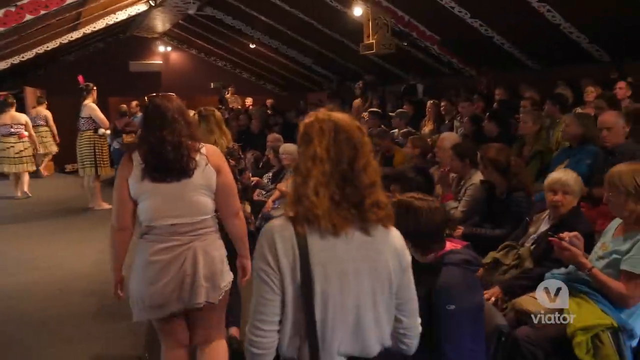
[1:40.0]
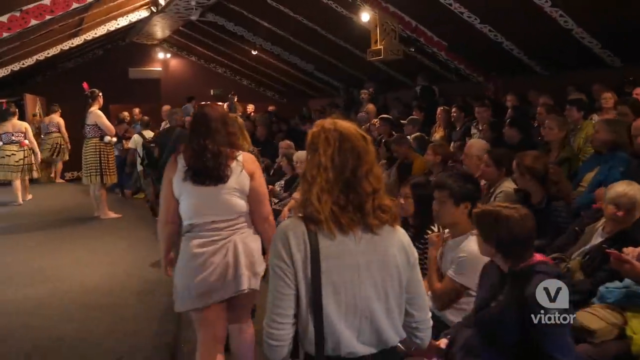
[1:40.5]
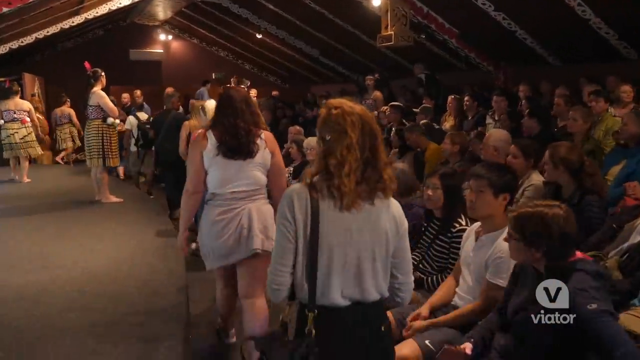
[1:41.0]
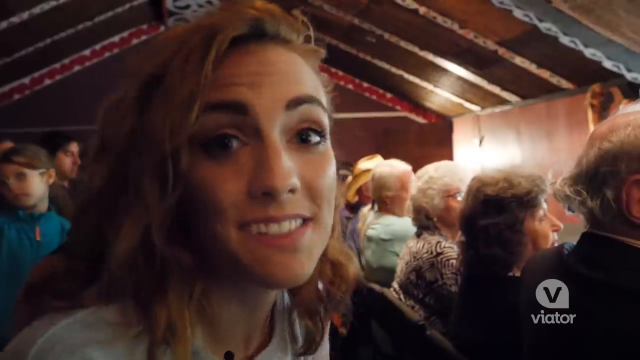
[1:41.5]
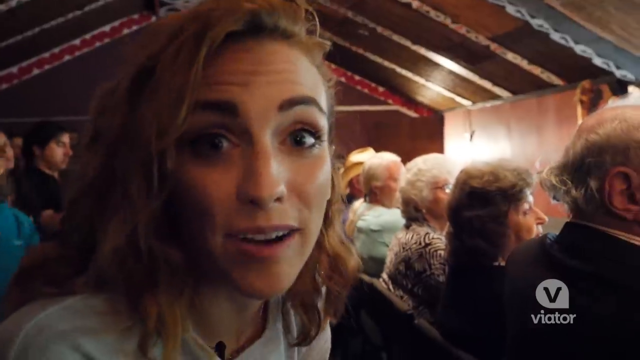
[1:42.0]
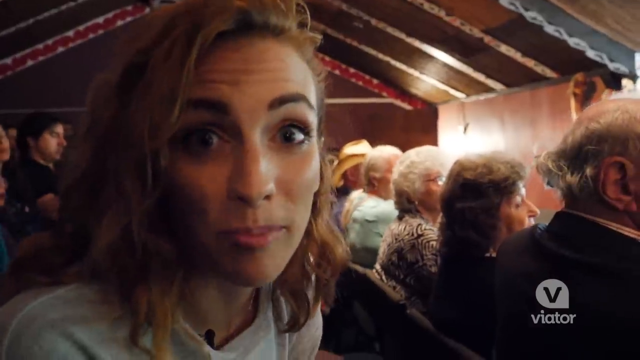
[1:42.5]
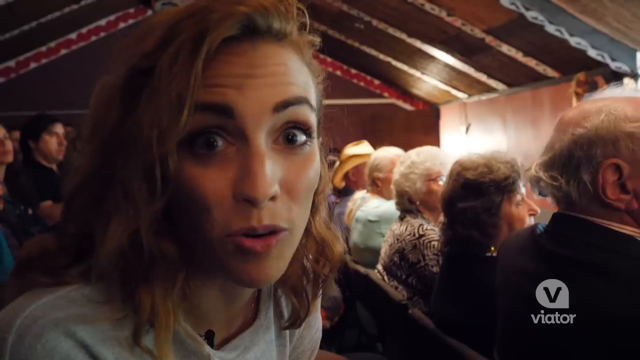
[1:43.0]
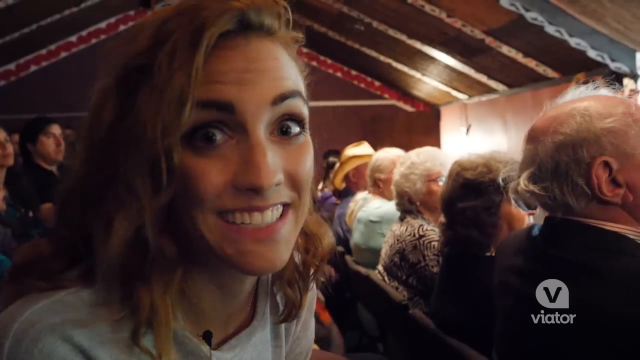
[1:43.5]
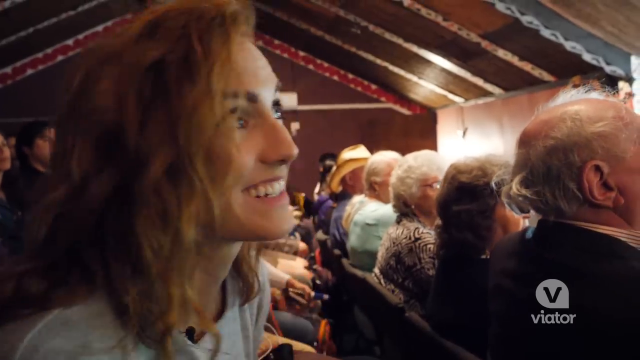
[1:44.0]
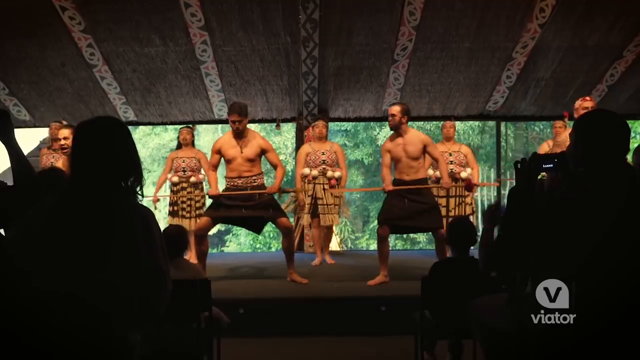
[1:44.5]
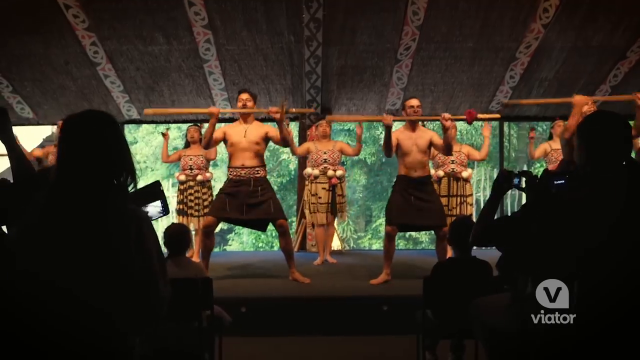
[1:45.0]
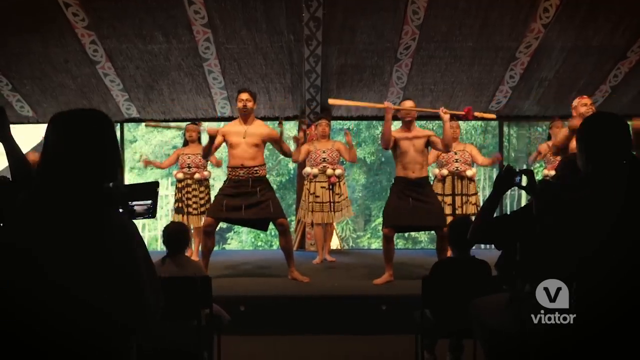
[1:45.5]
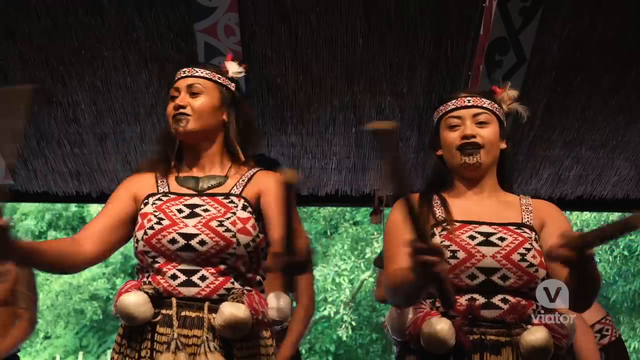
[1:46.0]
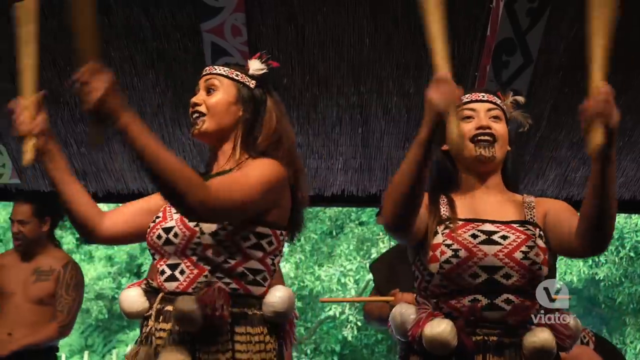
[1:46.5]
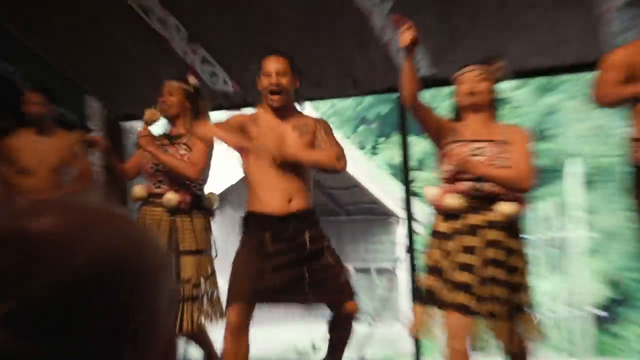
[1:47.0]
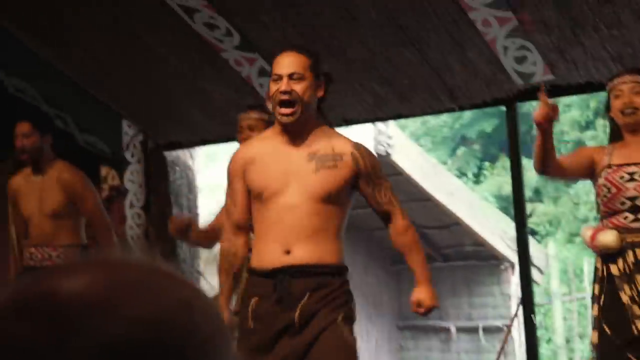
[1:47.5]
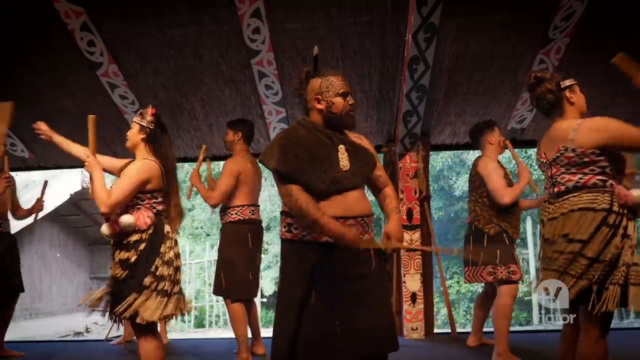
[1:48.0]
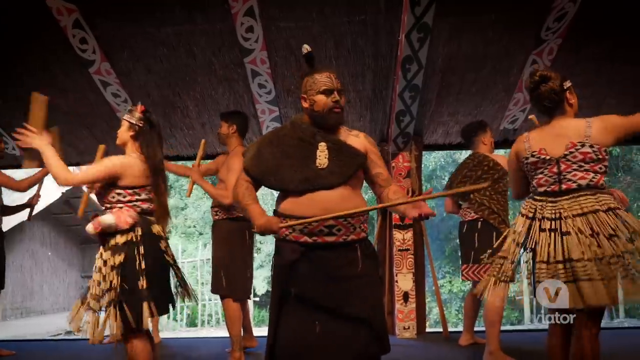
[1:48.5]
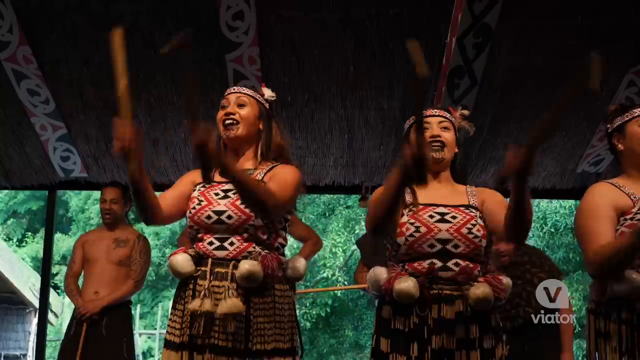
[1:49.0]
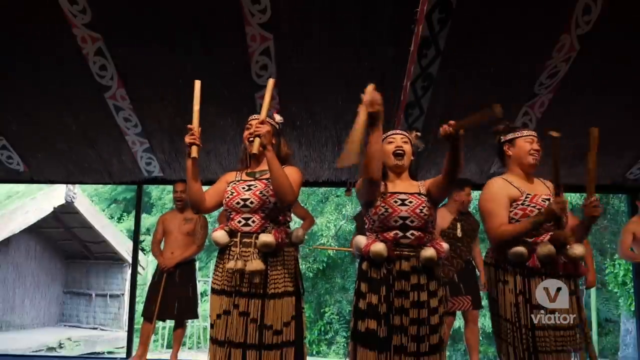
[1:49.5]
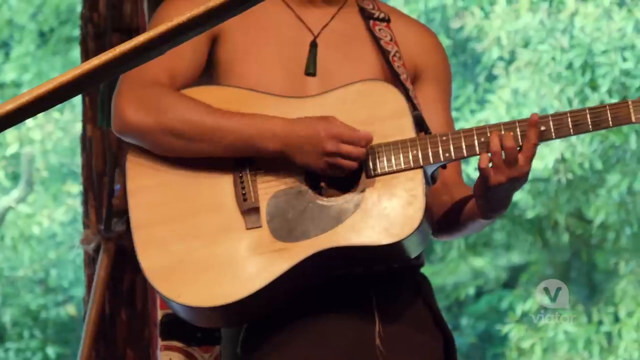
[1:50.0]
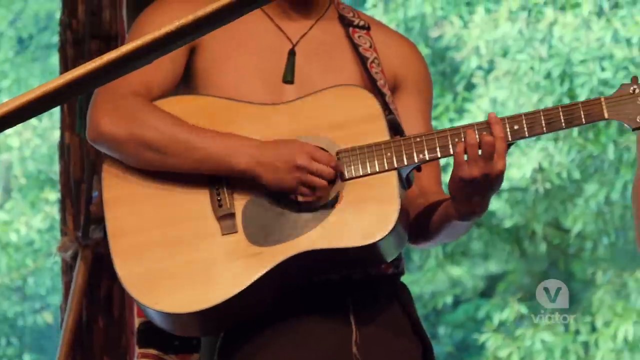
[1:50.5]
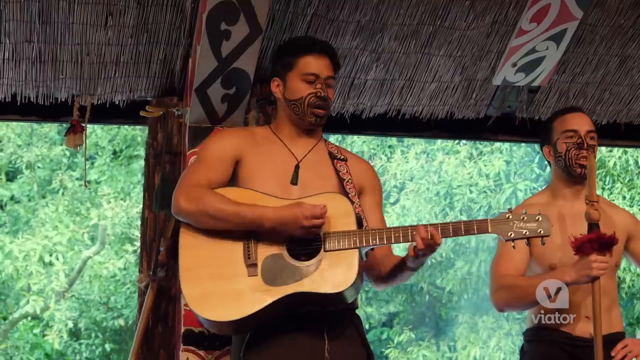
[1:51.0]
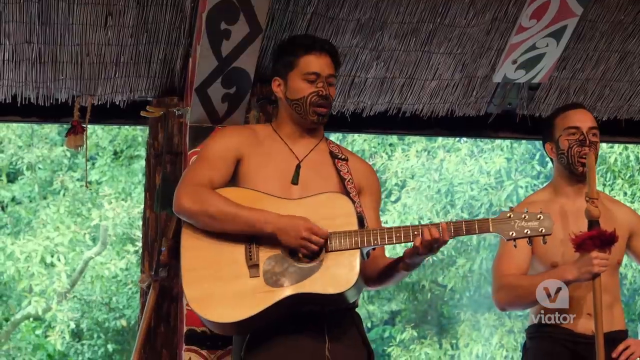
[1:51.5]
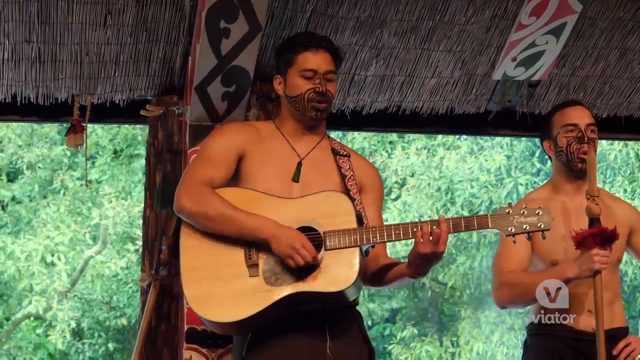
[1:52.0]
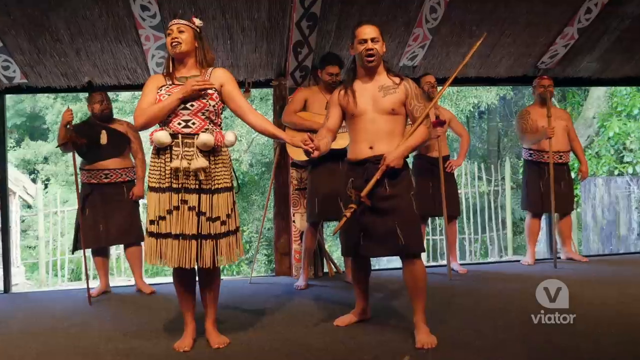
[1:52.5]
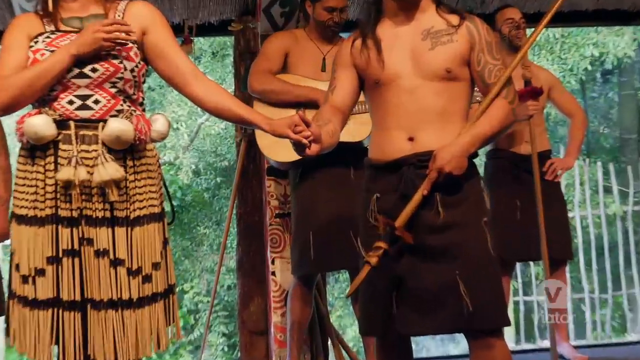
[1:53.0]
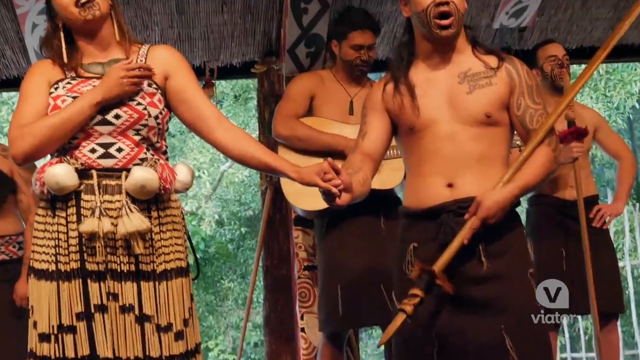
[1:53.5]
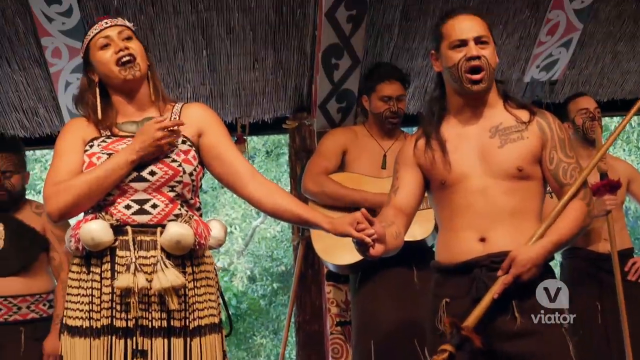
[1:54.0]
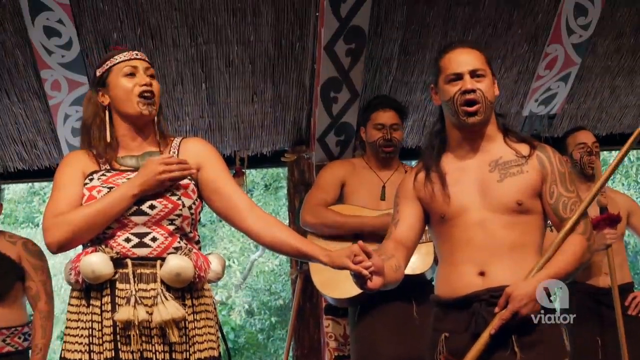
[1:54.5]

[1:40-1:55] The host sits in the audience and talks to the camera. On a stage, a bunch of the native people do different things and appear to be singing. Many of them hold sticks and raise them up, and women wave two small sticks in their hands. There appear to be two rows, with the men in front and the women behind. A man plays a guitar, and a man and a woman hold hands; the man holds a stick and the woman, who looks like she is singing, taps her chest with her fingers. The women all wear dresses with tribal patterns on the bust and headbands with feathers, while the men still wear their black skirts.